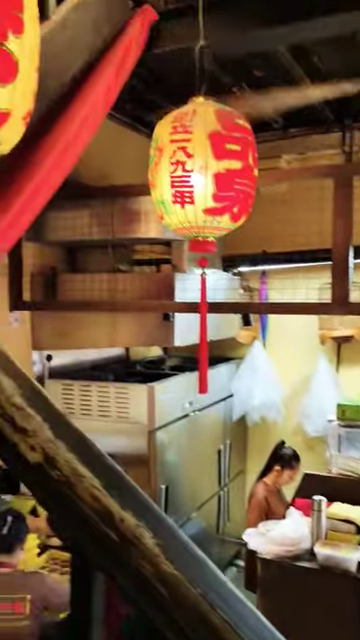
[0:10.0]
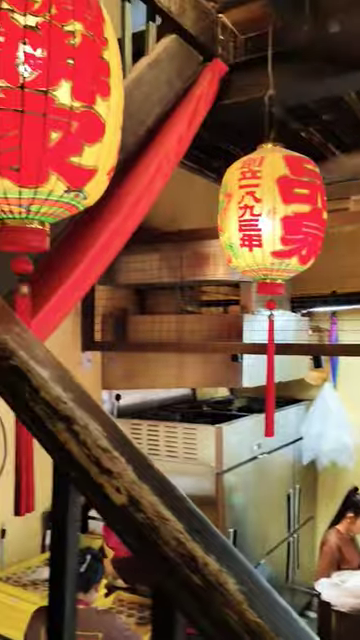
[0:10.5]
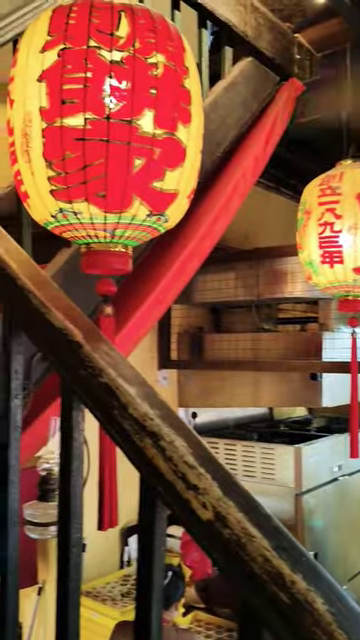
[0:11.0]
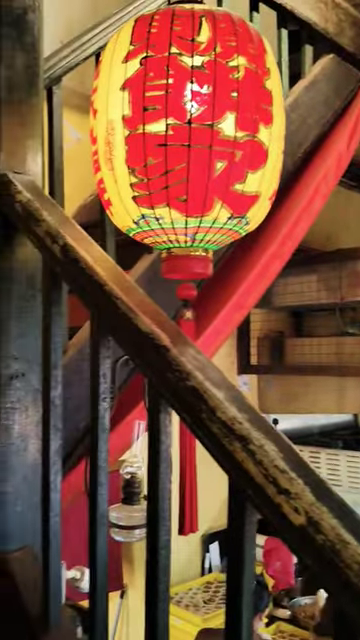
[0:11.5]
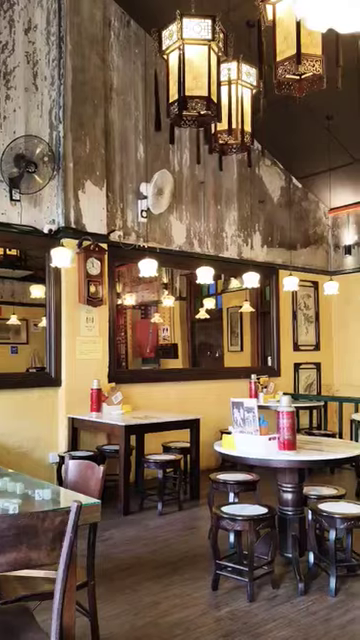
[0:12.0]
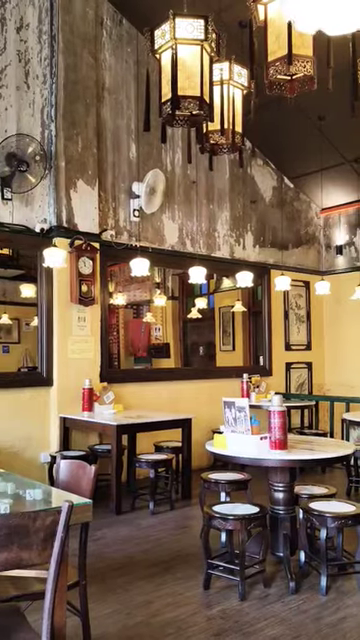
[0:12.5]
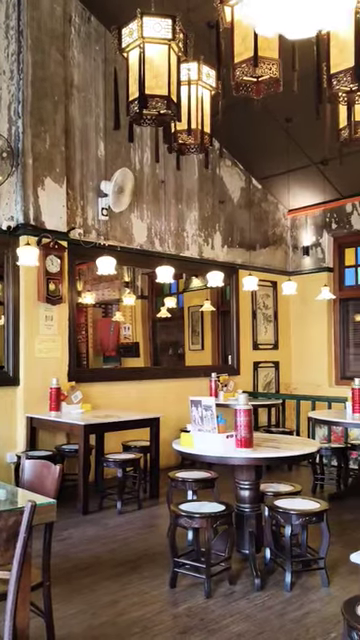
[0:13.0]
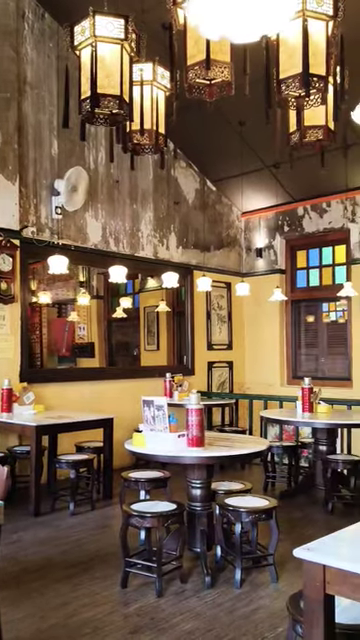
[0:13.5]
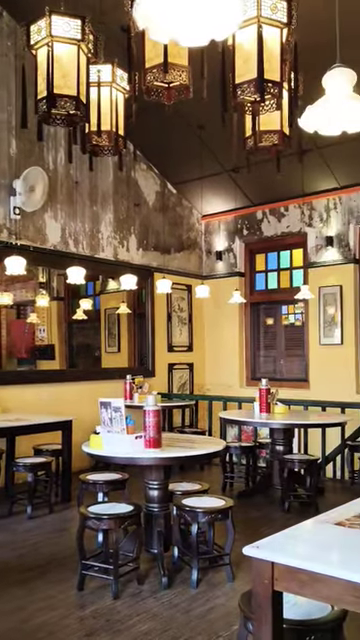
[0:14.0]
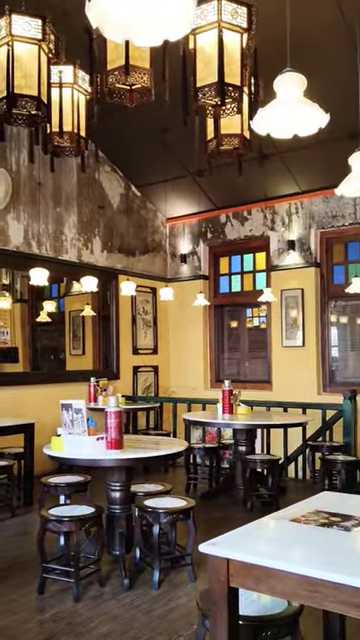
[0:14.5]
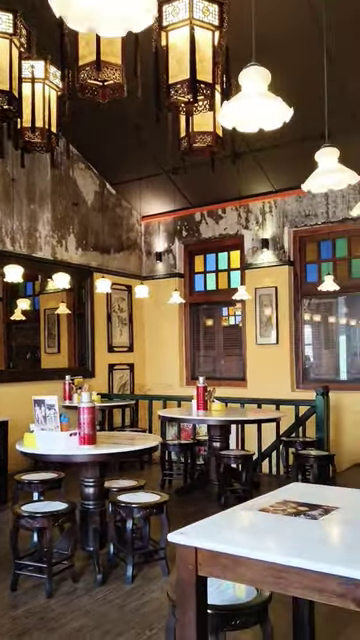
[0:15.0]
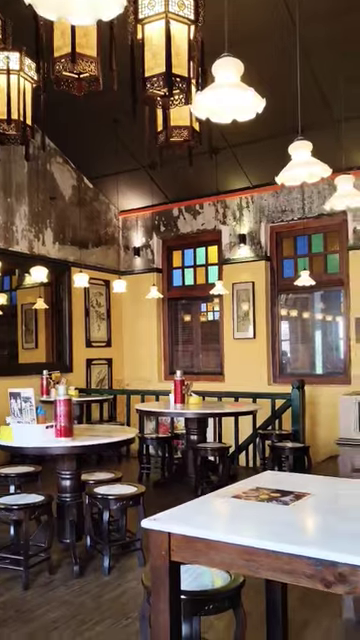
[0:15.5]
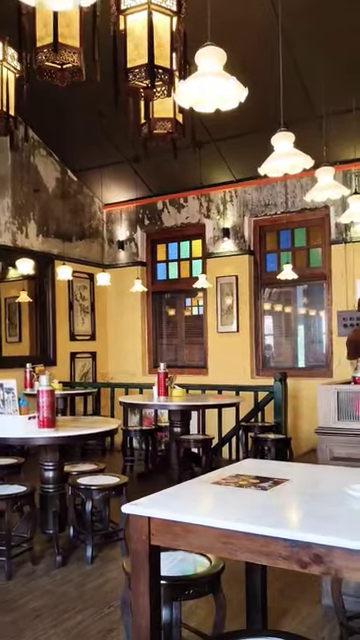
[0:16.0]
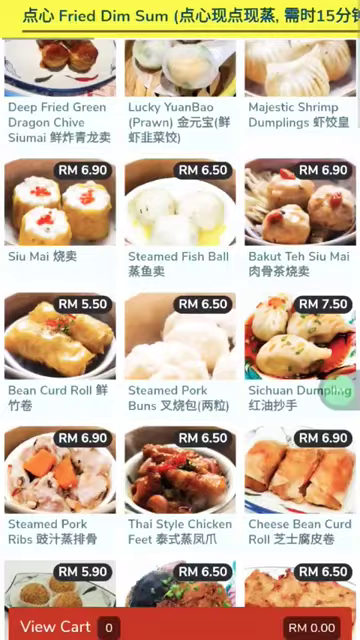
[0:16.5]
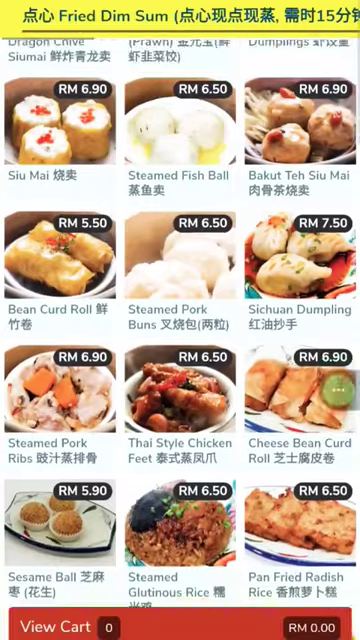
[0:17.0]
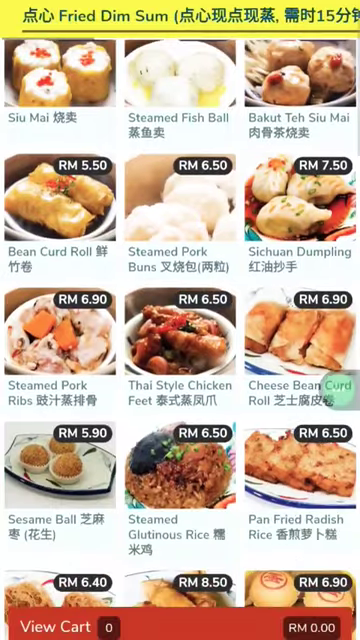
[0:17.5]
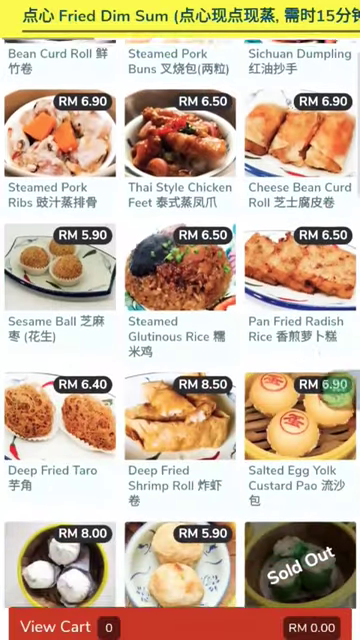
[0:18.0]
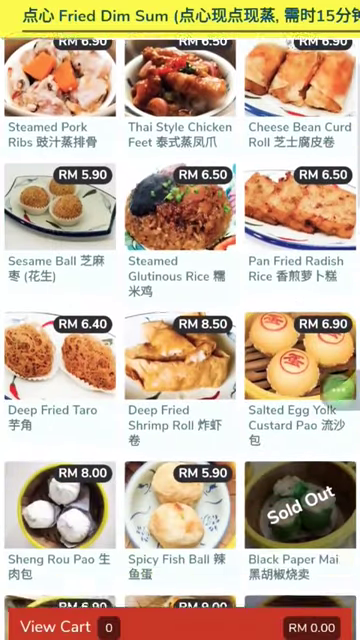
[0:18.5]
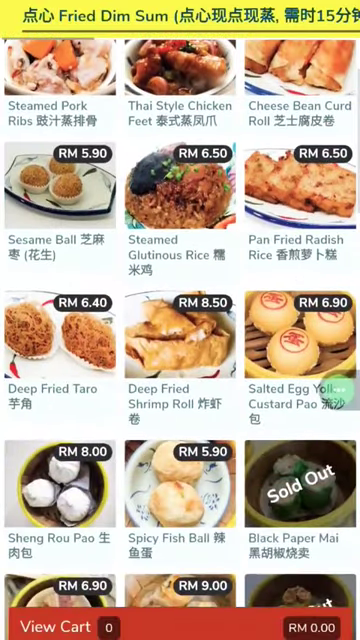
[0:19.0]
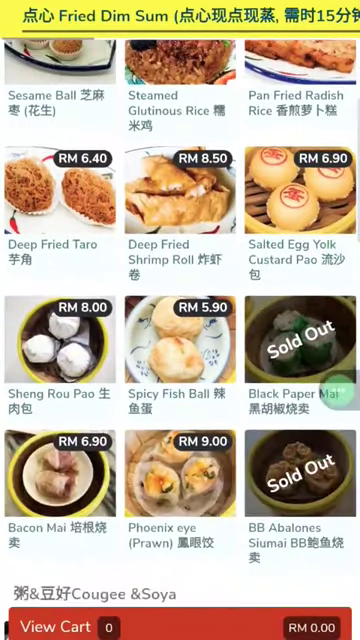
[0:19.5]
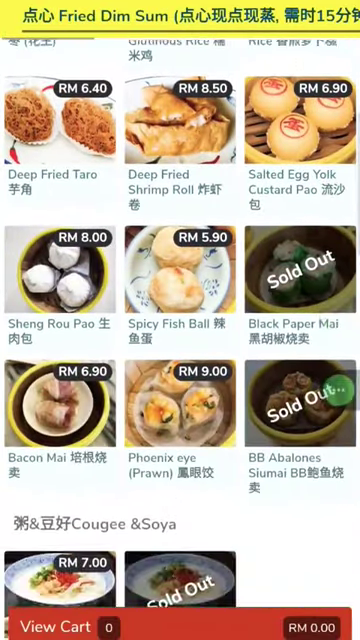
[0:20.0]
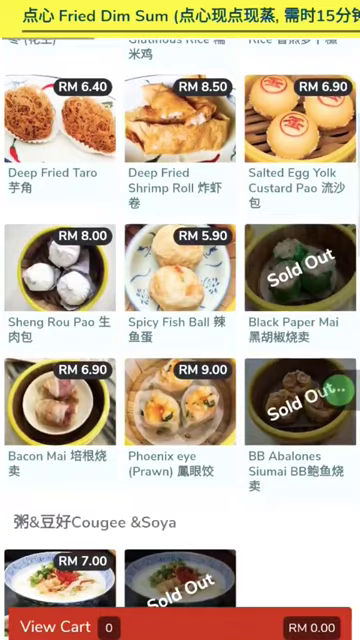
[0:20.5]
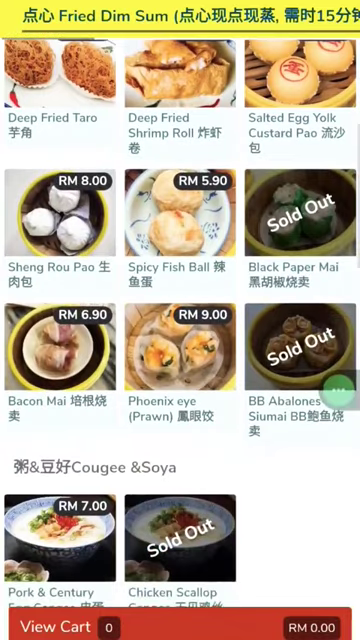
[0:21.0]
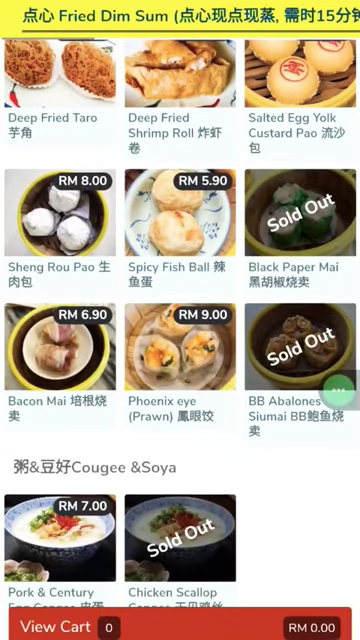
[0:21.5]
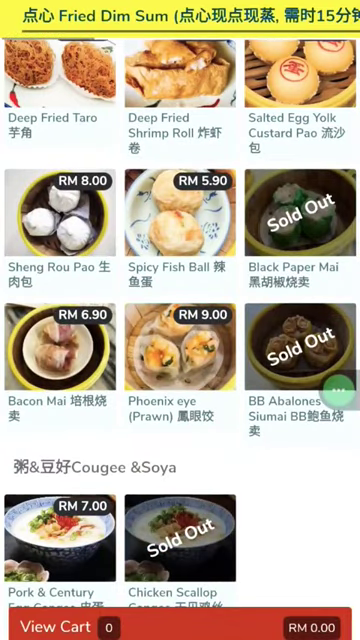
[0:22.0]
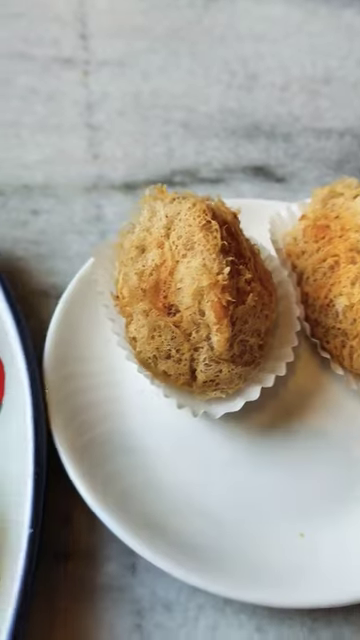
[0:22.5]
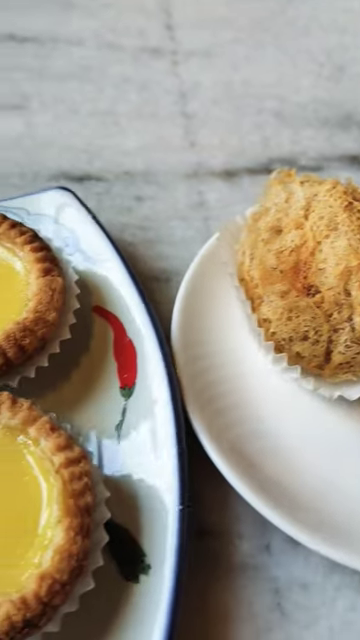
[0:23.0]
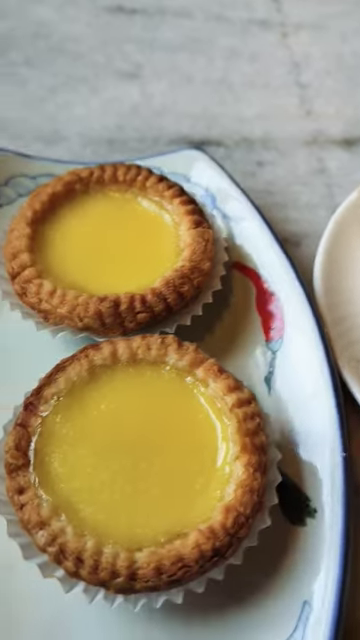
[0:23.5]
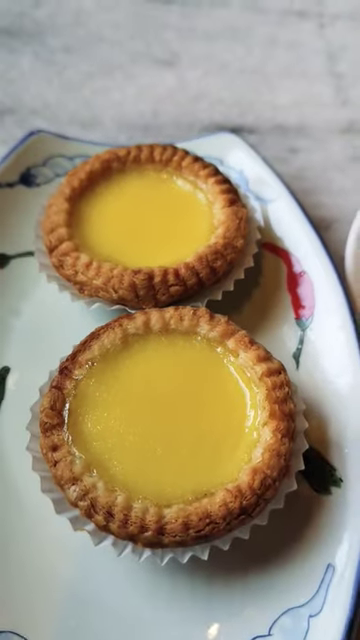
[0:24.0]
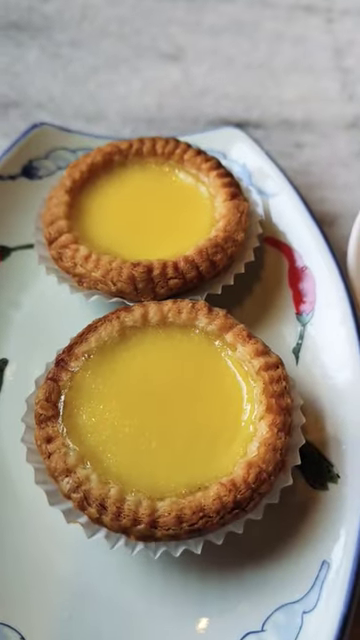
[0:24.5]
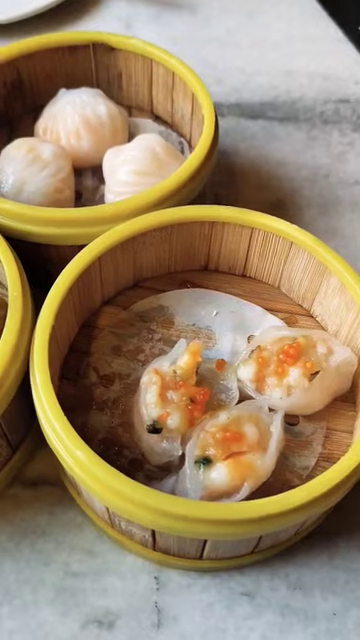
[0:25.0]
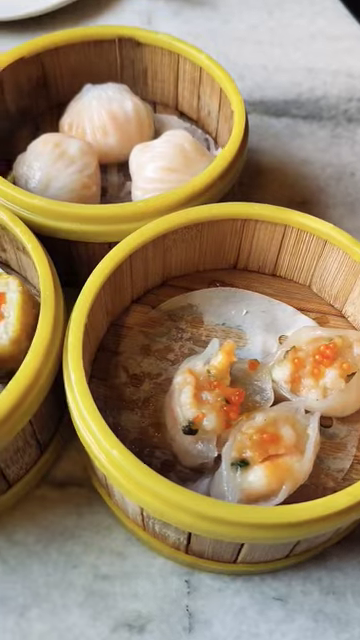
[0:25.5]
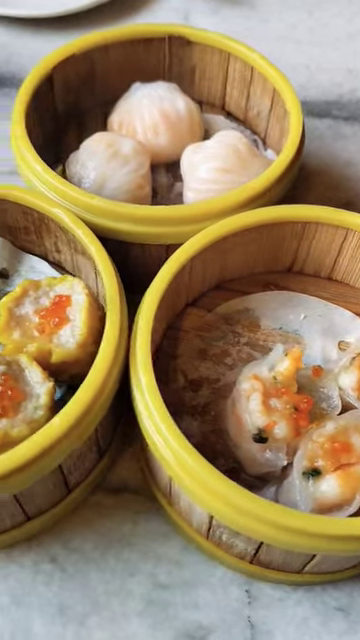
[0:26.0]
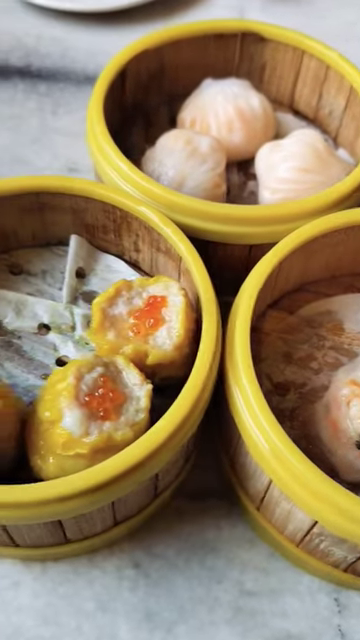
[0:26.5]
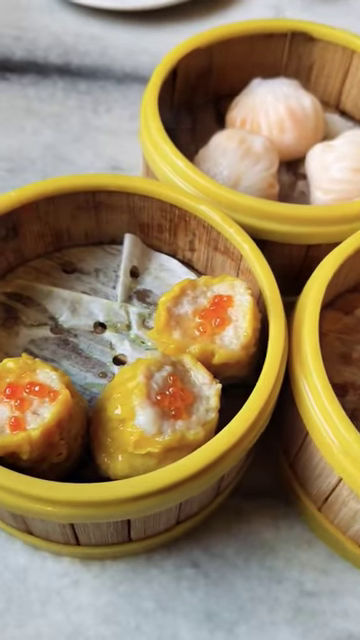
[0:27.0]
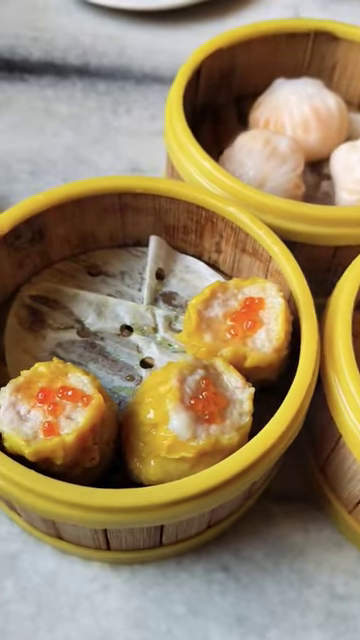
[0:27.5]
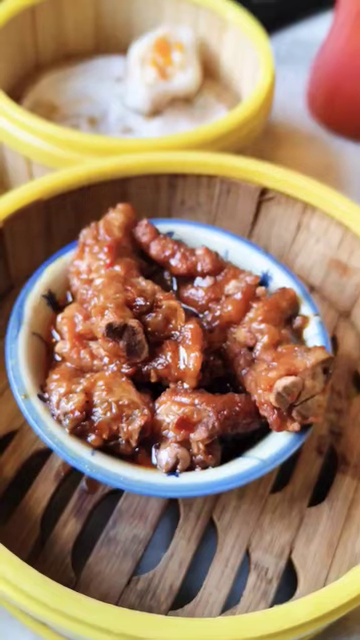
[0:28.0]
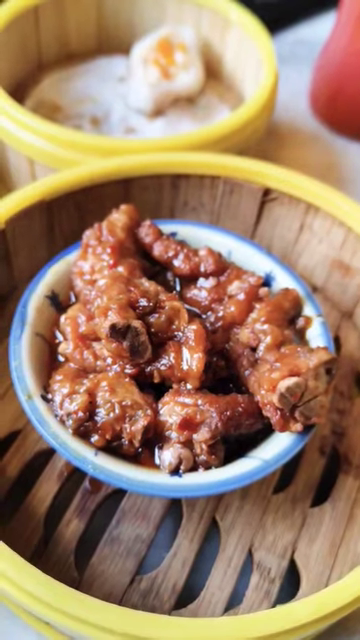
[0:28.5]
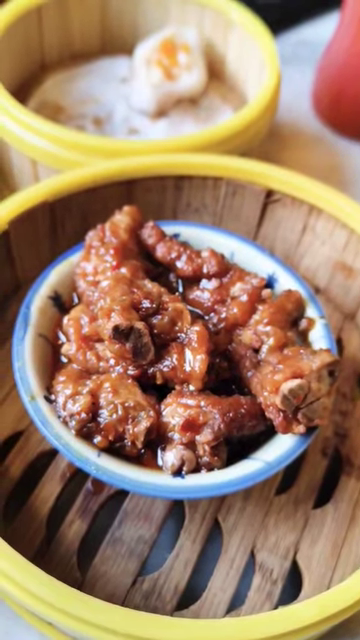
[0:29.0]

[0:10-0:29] Inside a pastry shop in a store in China, women roll different pastries and then prepare them in ovens and fryers. The video shows the dining area where people can sit down, order and eat their meals. It then moves to the store's menu, which shows the different items and their prices; it looks like the place is actually a restaurant, not just a bakery. The menu lists "bean curd roll," "steamed pork," "Thai style chicken," "cheese bean curd" and several other offerings for sale. Images of the food after it has been prepared are also shown.